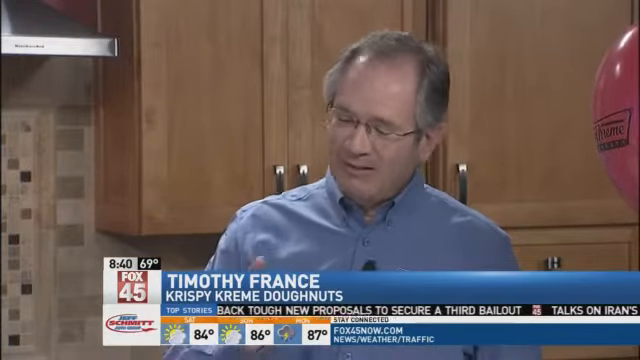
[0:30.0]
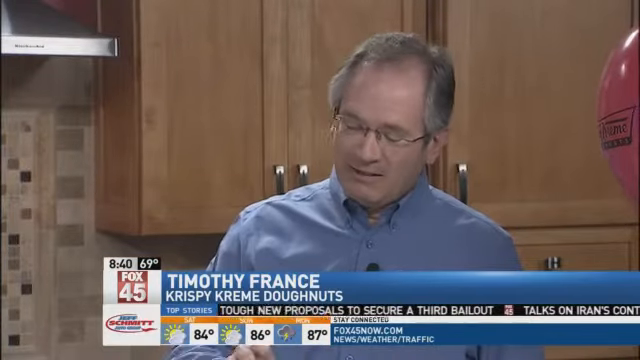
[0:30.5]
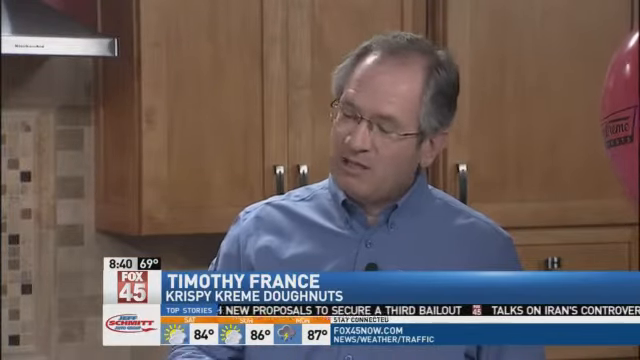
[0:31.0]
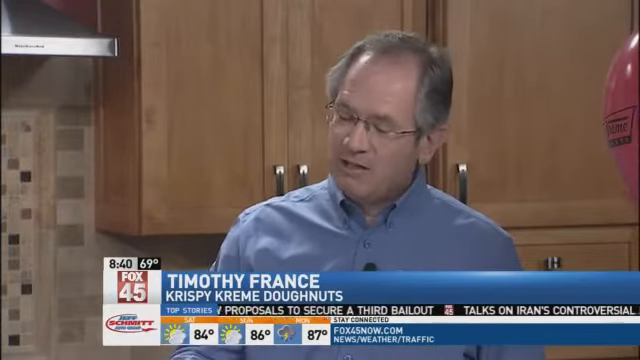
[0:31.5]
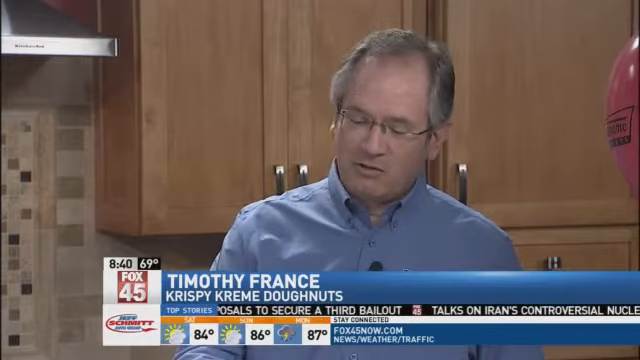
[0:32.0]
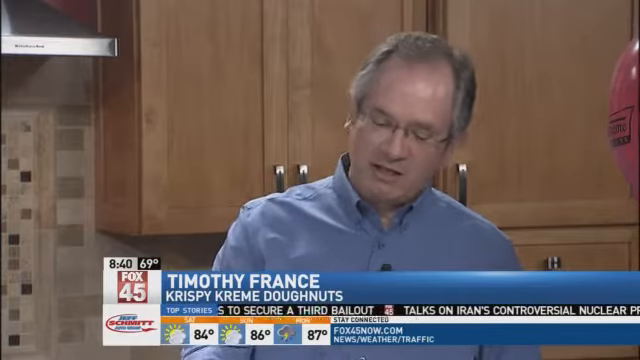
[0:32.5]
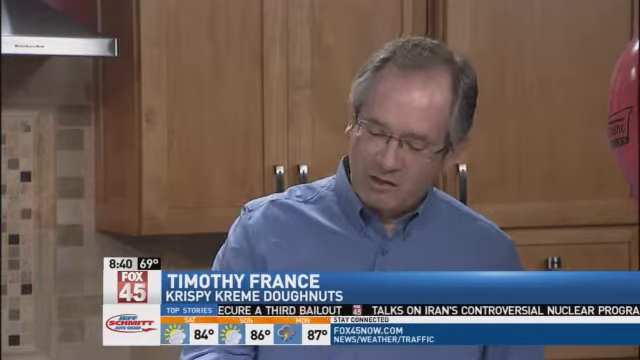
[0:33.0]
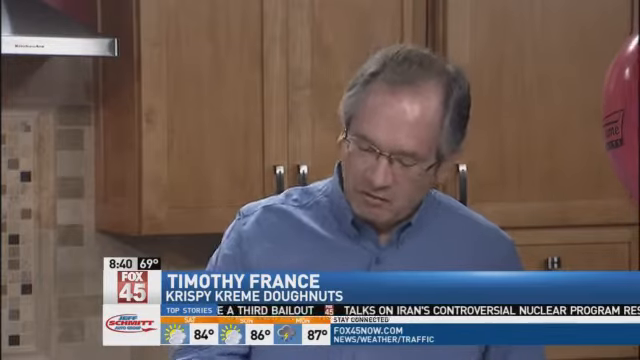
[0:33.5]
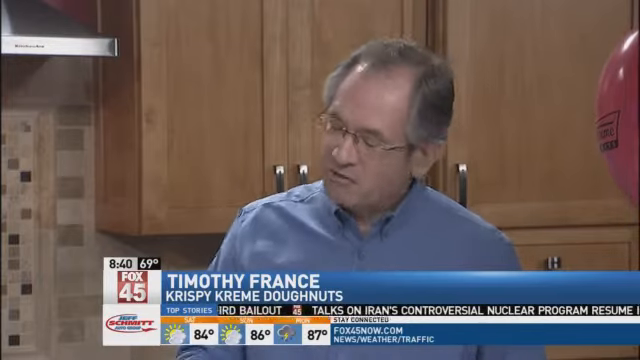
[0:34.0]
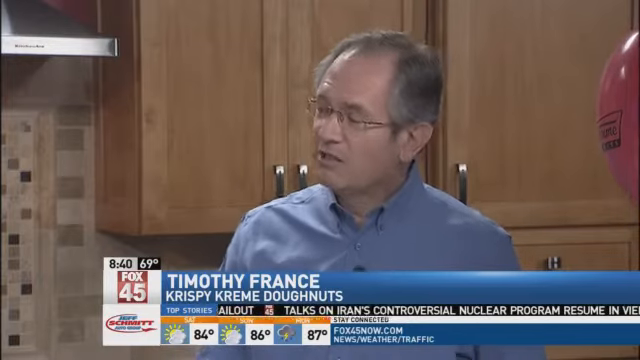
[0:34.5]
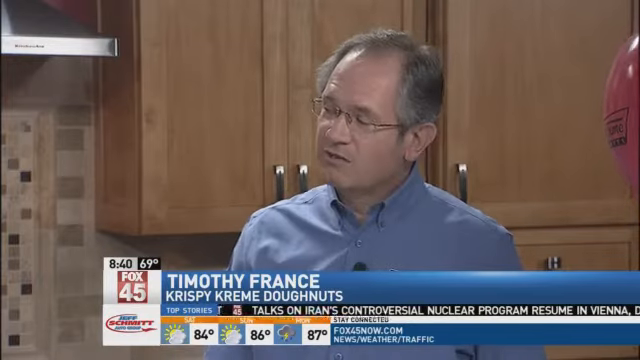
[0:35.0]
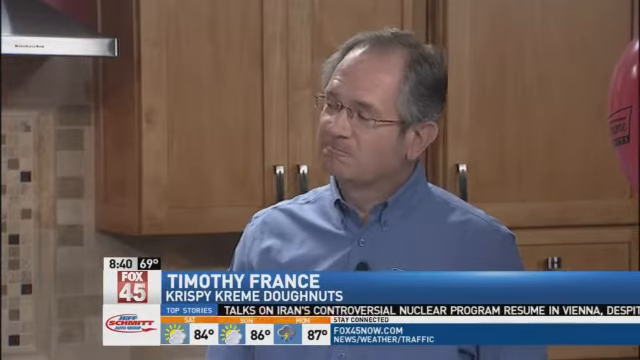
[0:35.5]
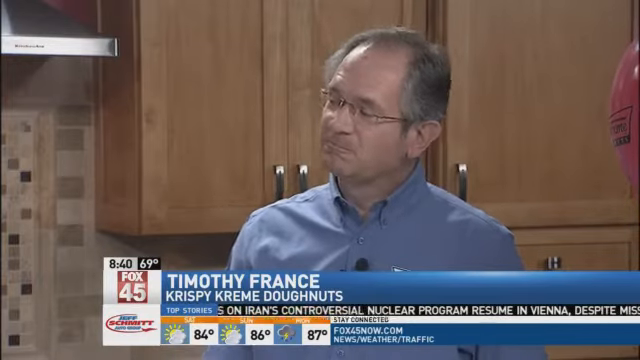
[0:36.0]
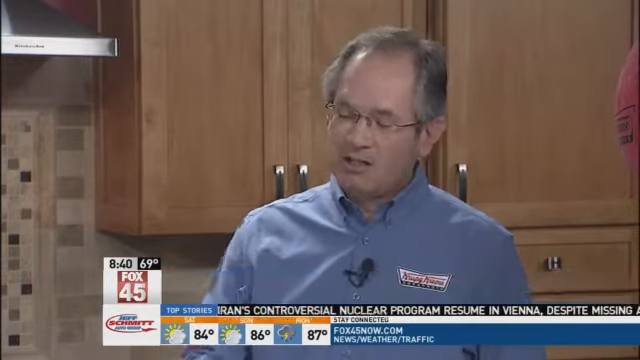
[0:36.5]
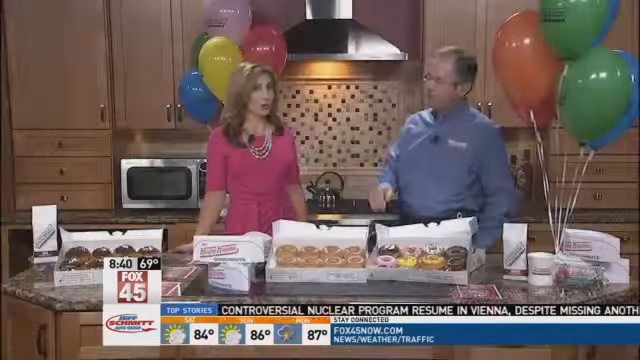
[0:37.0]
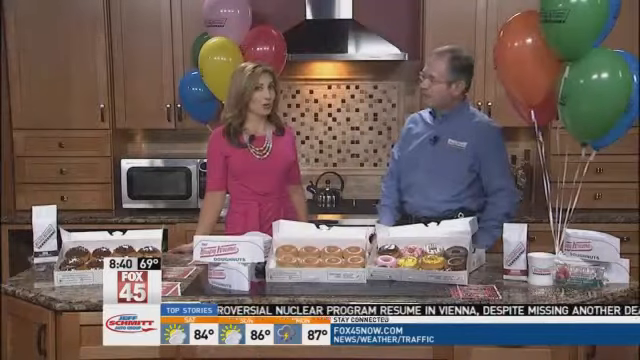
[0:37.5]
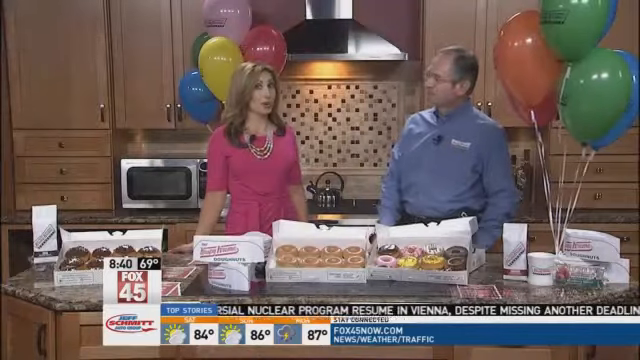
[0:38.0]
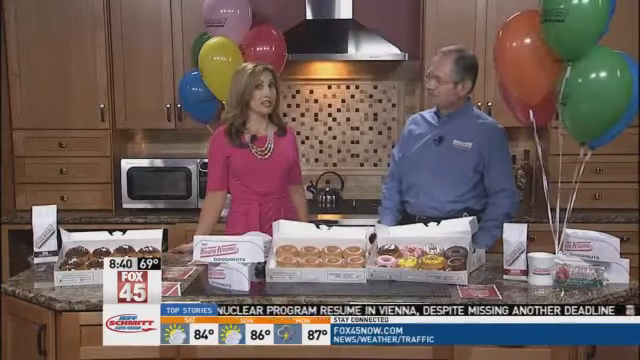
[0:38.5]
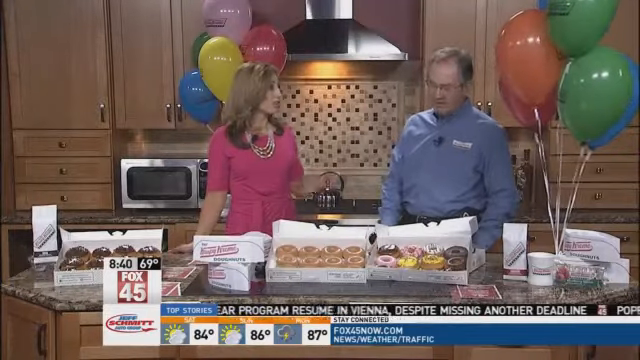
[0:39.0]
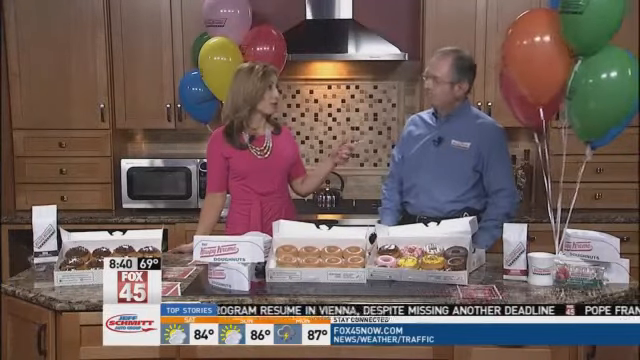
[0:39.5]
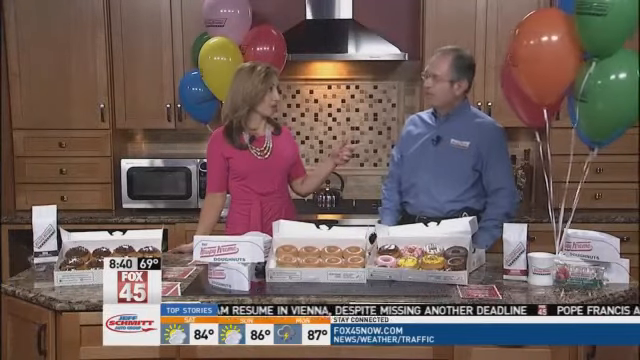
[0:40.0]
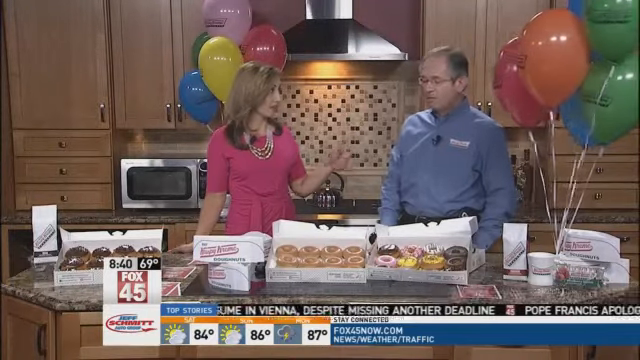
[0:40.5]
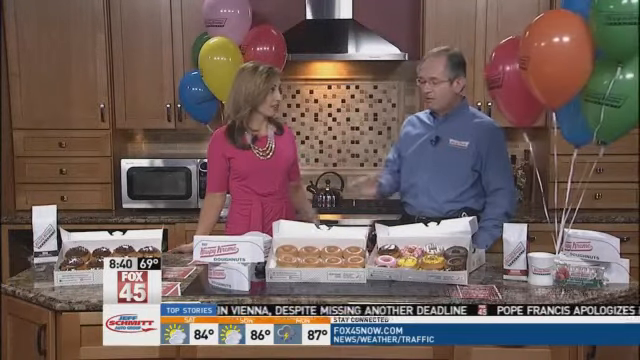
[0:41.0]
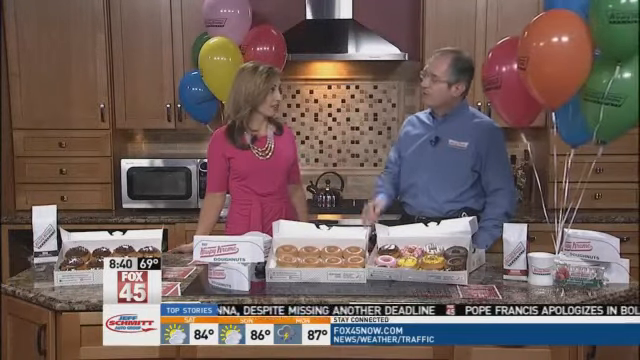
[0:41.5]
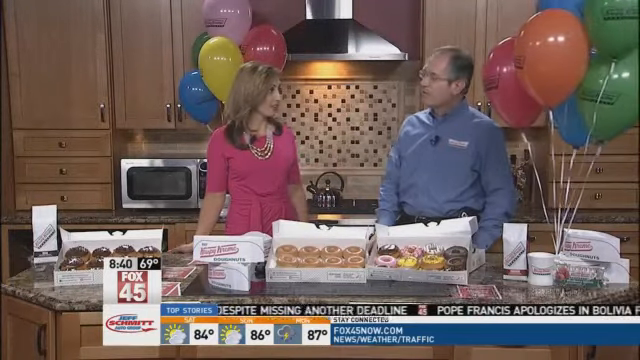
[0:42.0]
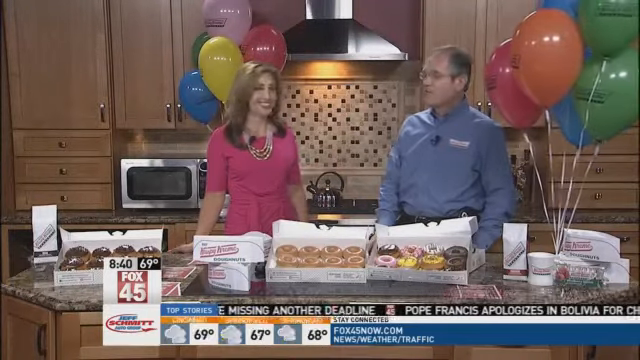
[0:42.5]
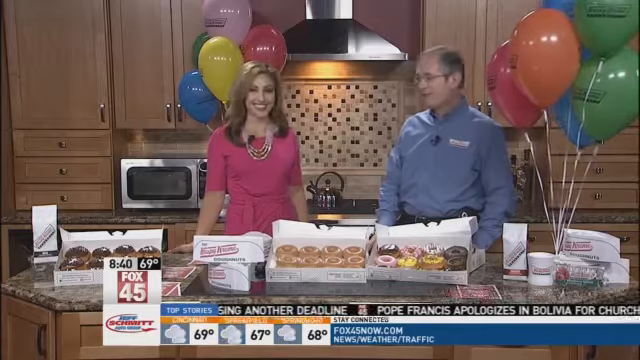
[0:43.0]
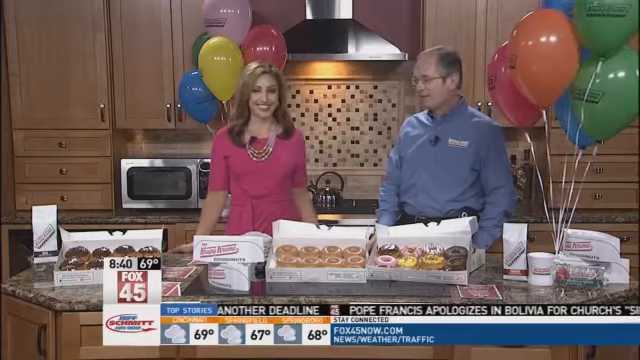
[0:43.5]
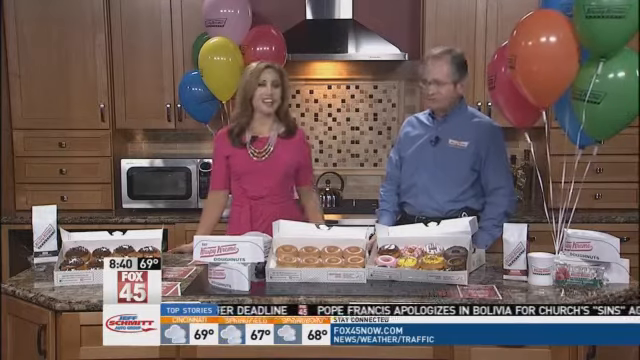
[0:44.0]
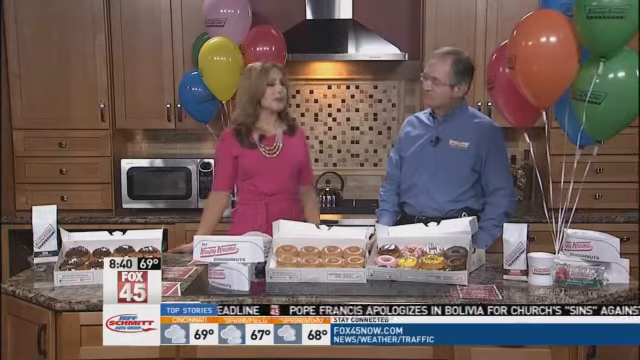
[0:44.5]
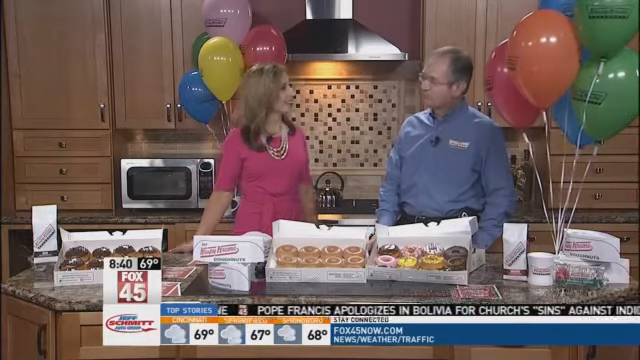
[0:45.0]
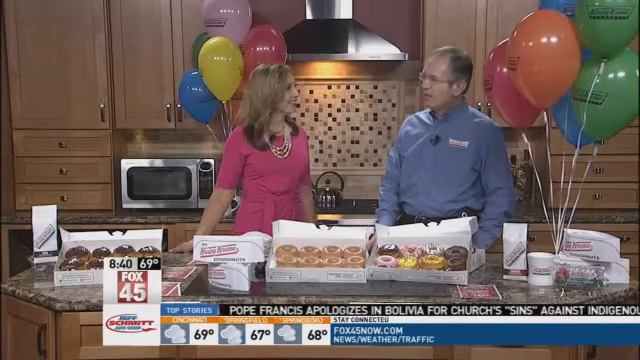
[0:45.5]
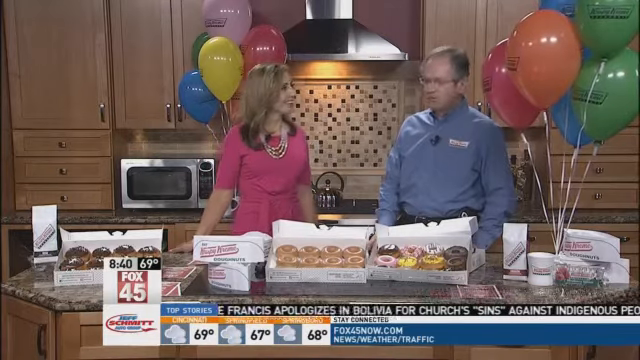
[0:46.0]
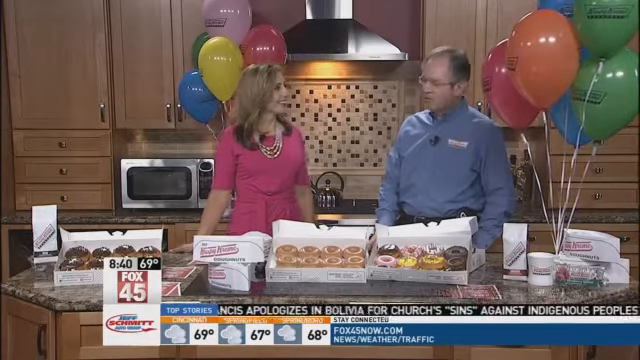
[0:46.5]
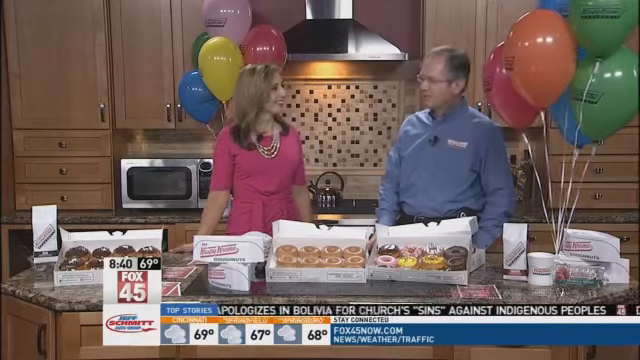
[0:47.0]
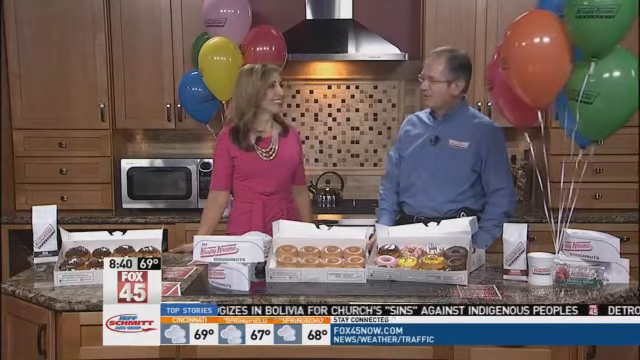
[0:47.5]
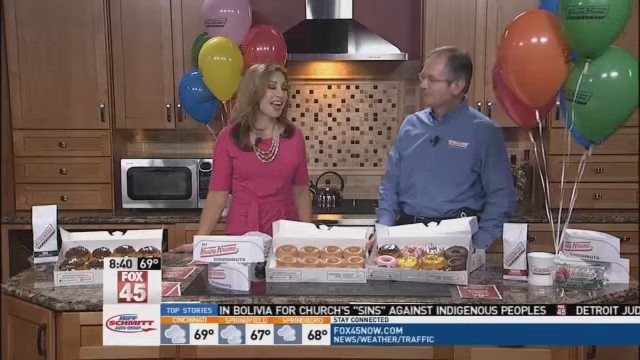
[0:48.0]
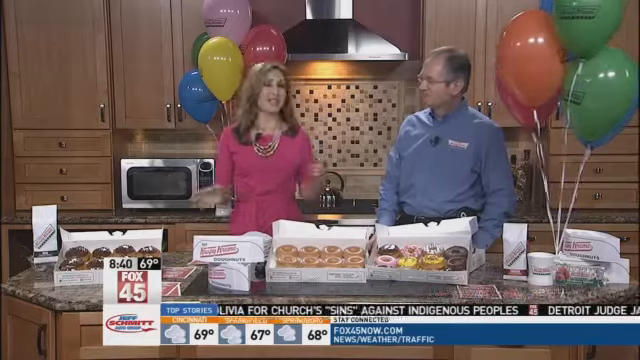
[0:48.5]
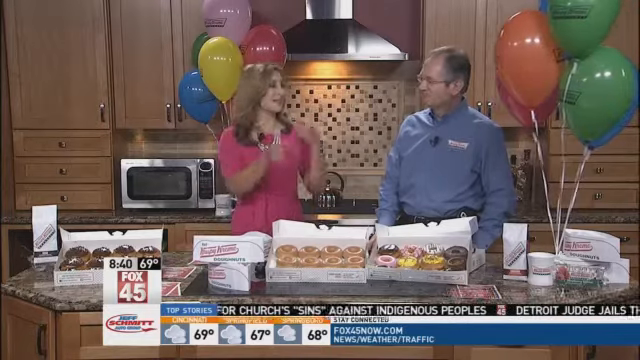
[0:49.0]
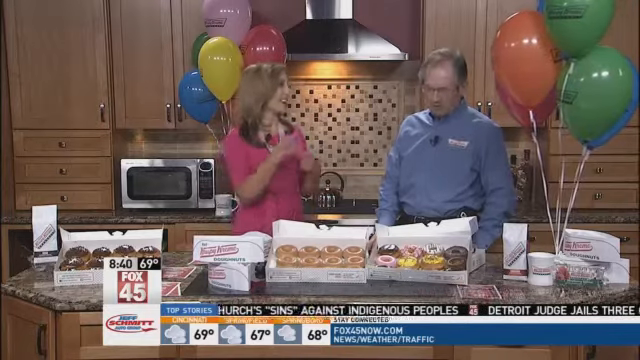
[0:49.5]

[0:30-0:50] The close-up of Timothy France from Krispy Kreme Donuts continues. He keeps his eyelids kind of lowered as he talks, so it almost looks like he is looking down his nose; he might be looking at the donuts, but this is not entirely clear. He then looks up at her kind of sideways, moving in a very stiff way, his back and neck seeming to move together rather than independently. He gives a little pursed-lip smile. The camera zooms back out to show both of them at the kitchen countertop, and she does what seems to be her usual routine: looking directly at the camera, gesturing to him, asking him questions and smiling very politely. She seems to hold her smile a little longer than in a casual setting, and whenever she looks at him she projects a very friendly, warm demeanor, most likely for the camera.